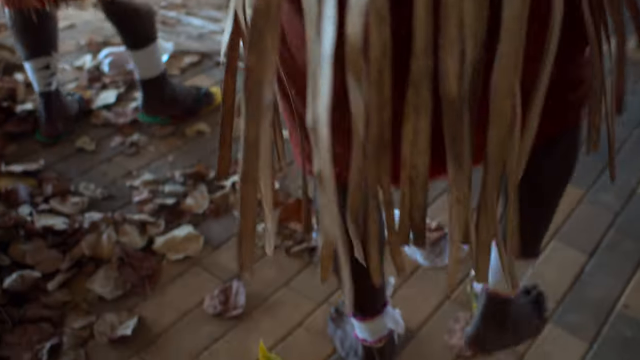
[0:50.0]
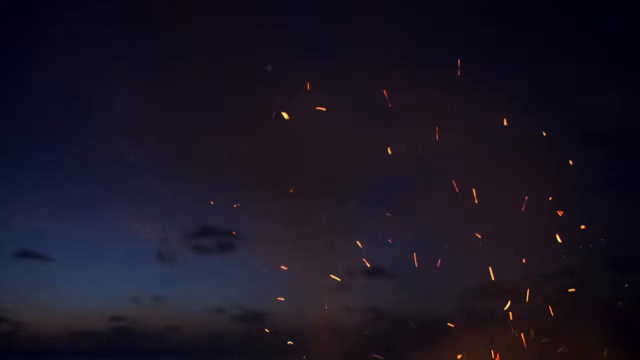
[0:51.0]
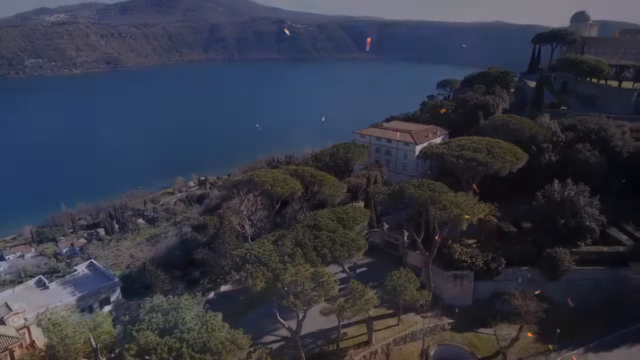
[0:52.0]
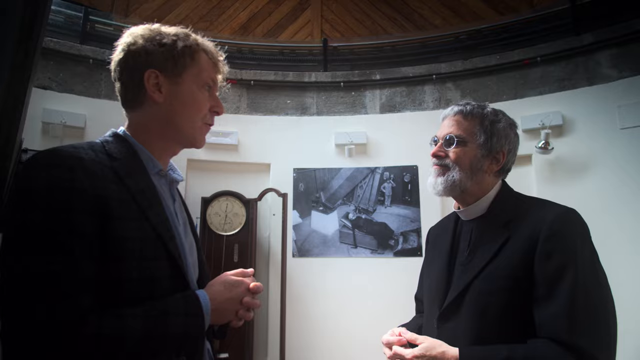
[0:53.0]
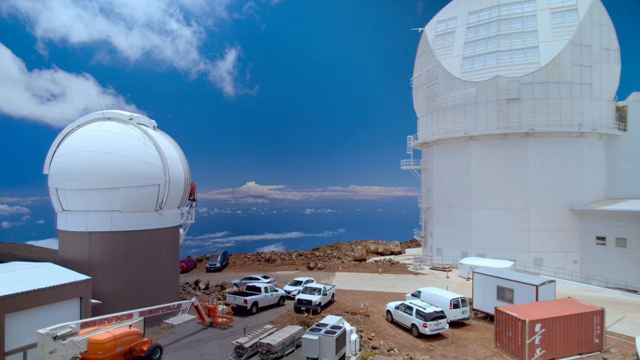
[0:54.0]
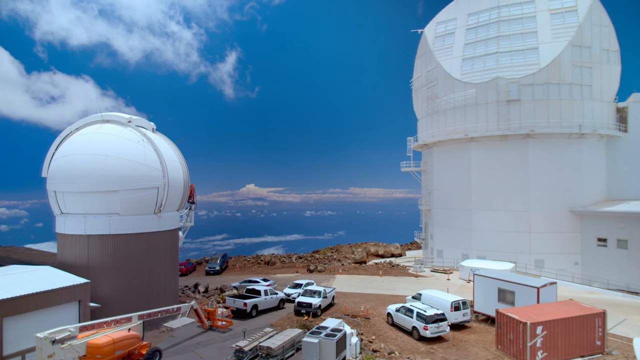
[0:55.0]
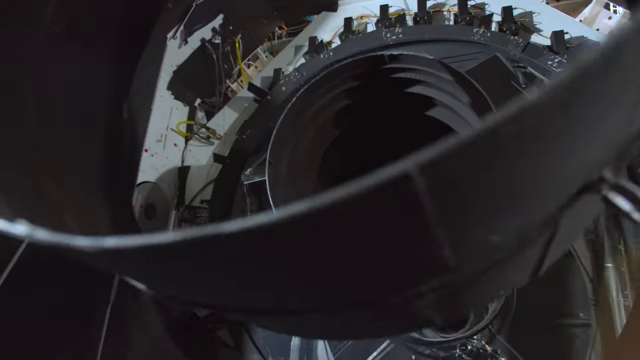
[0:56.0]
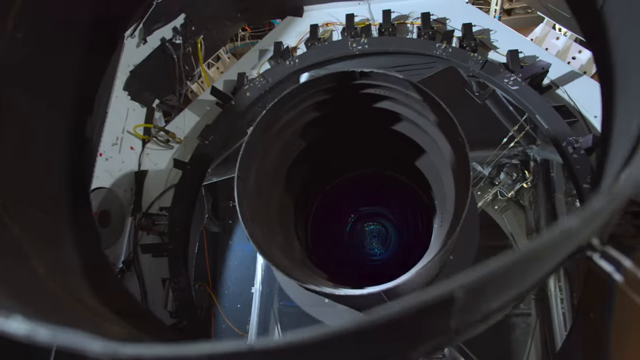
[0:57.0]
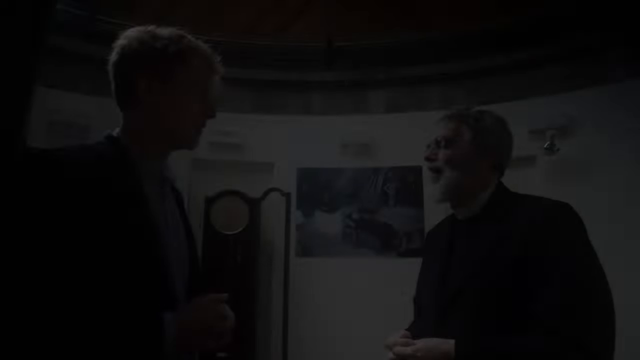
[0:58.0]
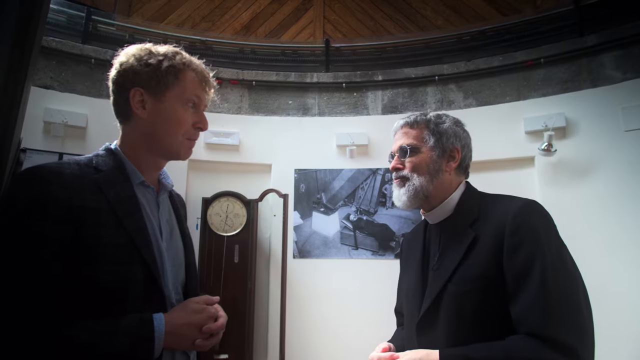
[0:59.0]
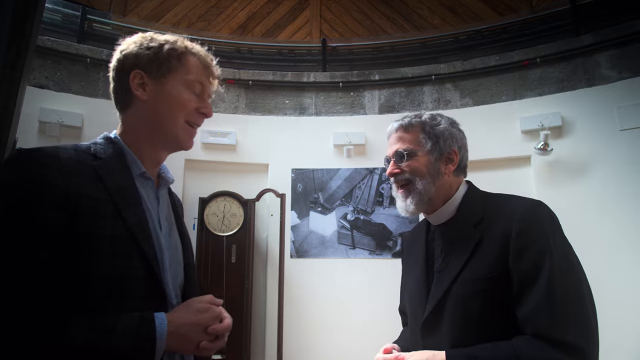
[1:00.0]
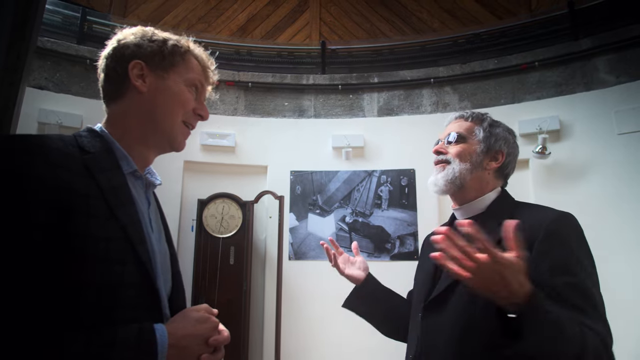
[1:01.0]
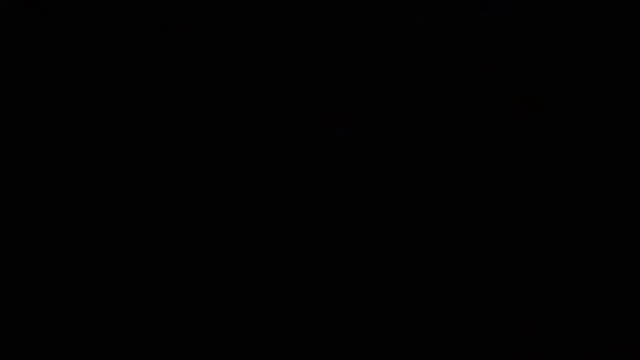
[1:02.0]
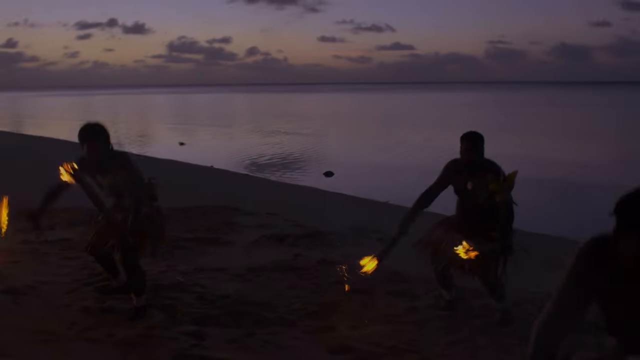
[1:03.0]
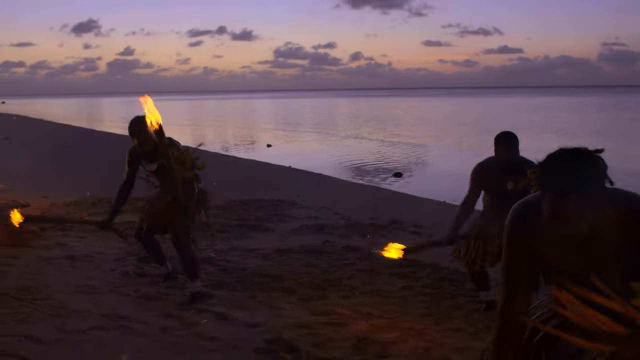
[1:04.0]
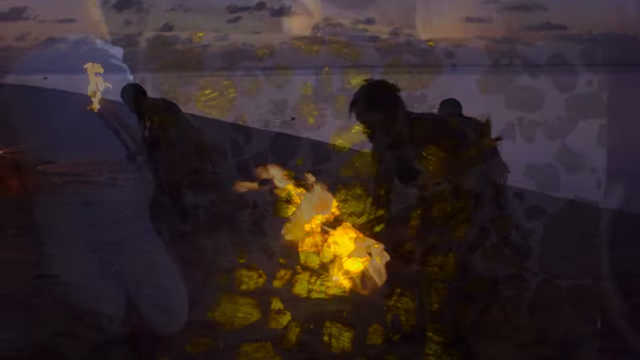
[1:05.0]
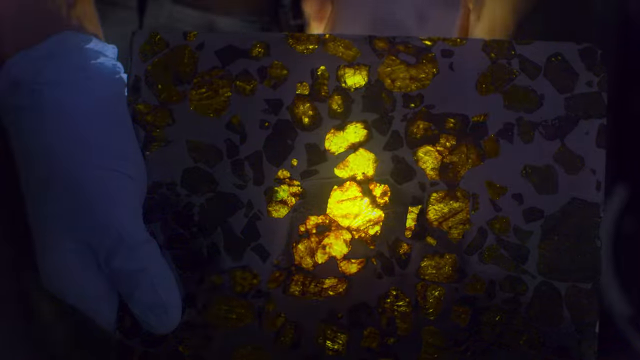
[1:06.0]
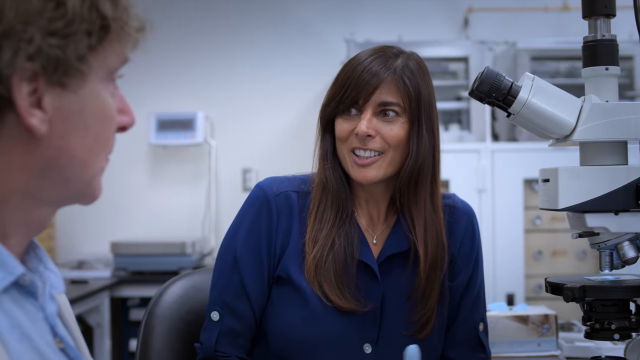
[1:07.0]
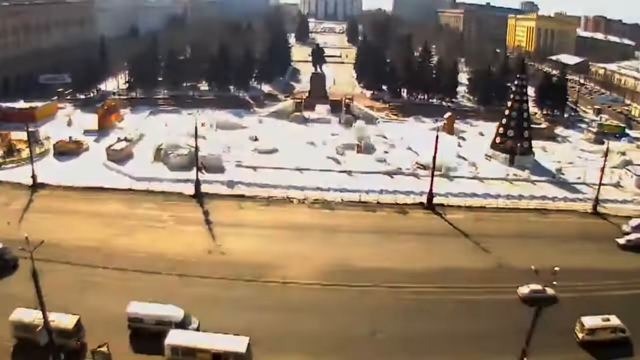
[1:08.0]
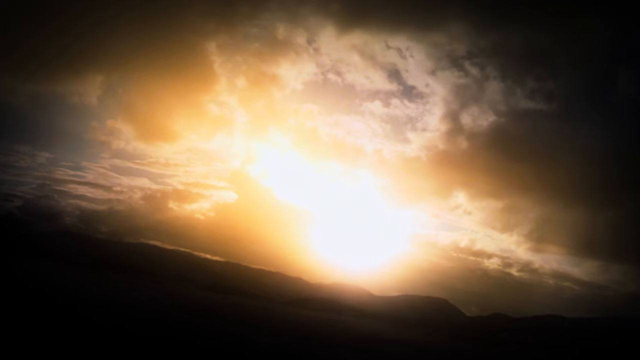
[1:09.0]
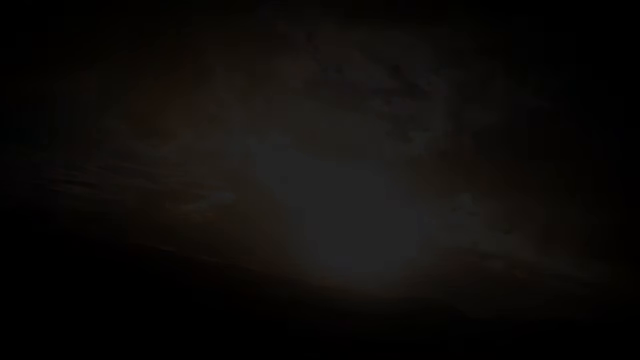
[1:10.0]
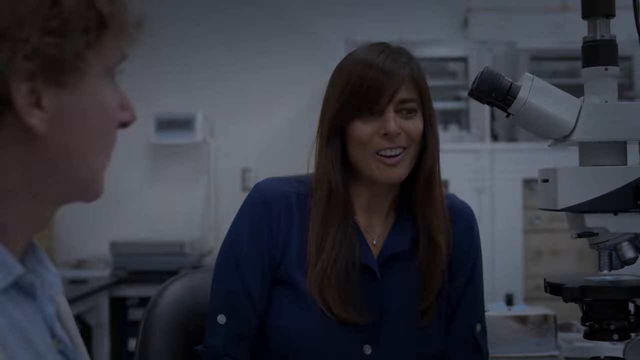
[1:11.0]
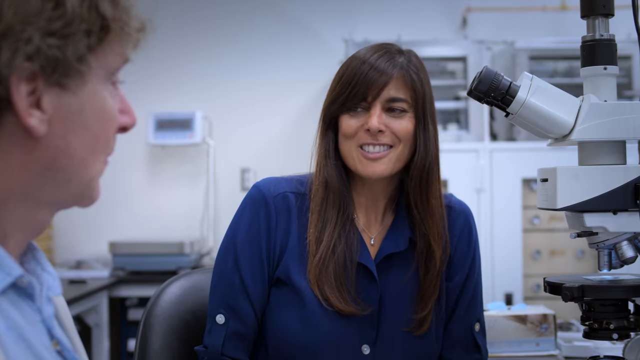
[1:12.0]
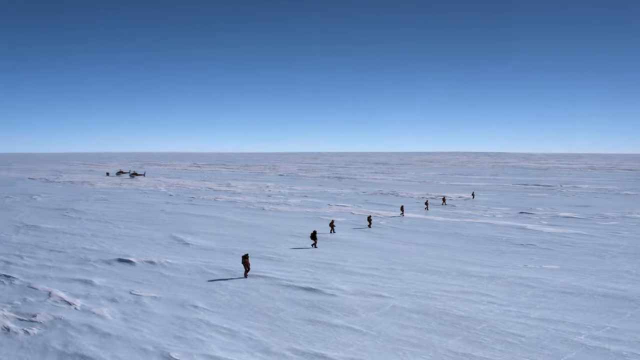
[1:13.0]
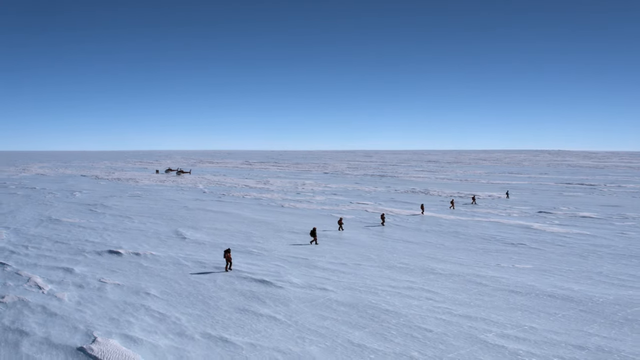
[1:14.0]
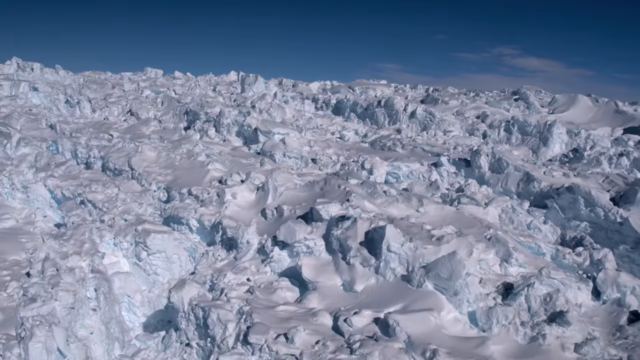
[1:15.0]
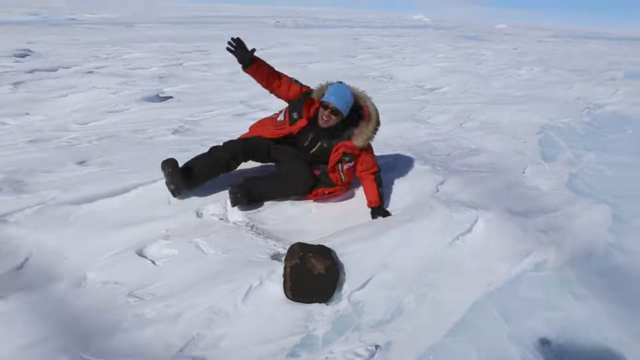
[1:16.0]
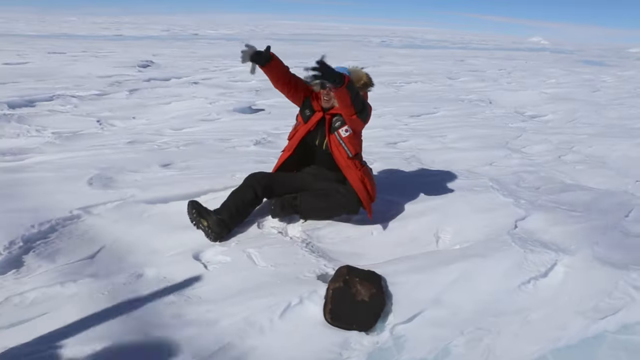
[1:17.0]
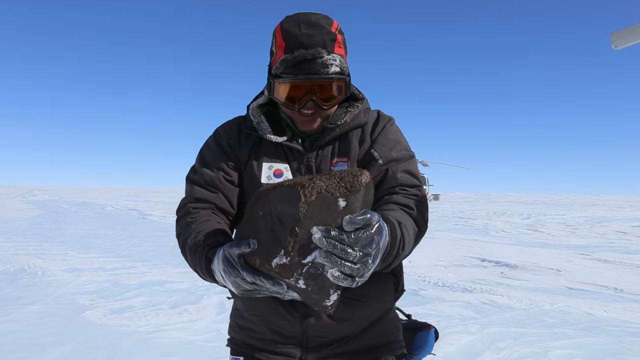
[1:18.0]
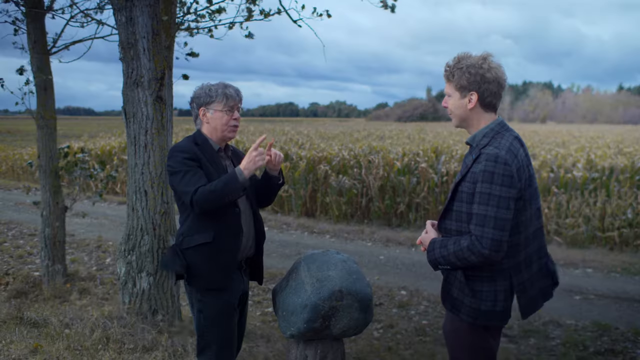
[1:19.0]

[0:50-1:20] The meteorite leaves a lot of damage, creating a hole in the desert. Black stones taken from the site are examined carefully in a lab by people wearing gloves. A group of Aboriginal people from Australia appears, followed by a plane flying over a coastline.